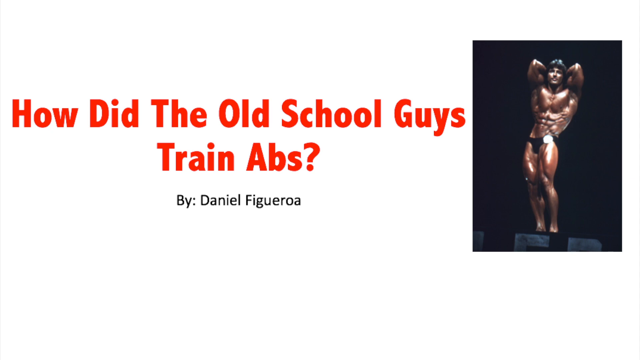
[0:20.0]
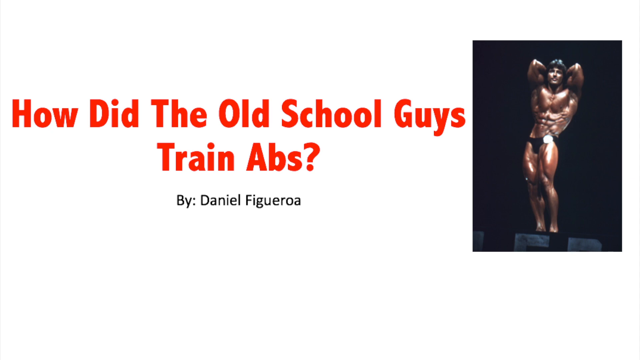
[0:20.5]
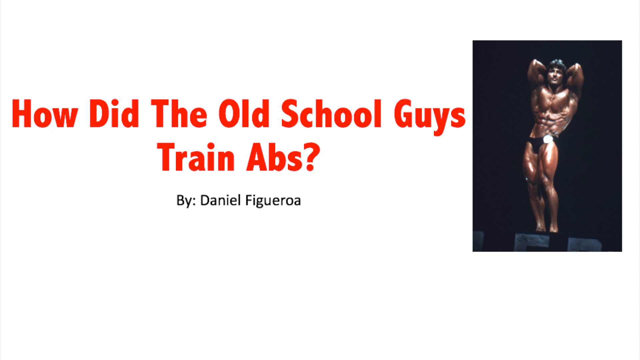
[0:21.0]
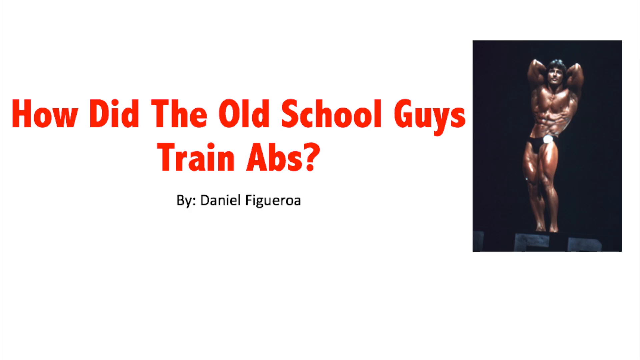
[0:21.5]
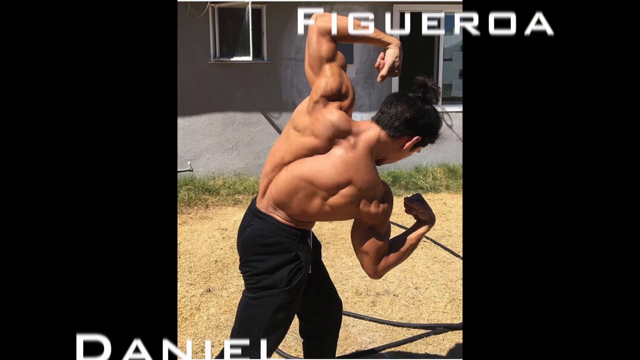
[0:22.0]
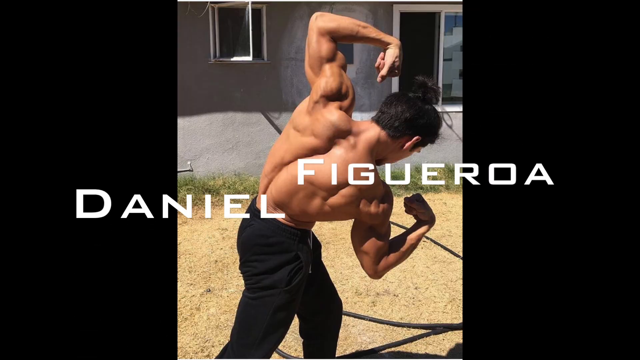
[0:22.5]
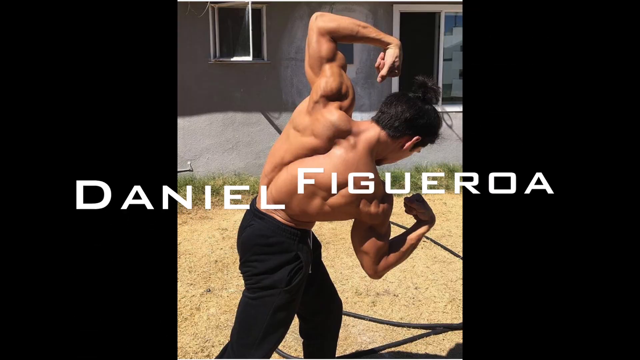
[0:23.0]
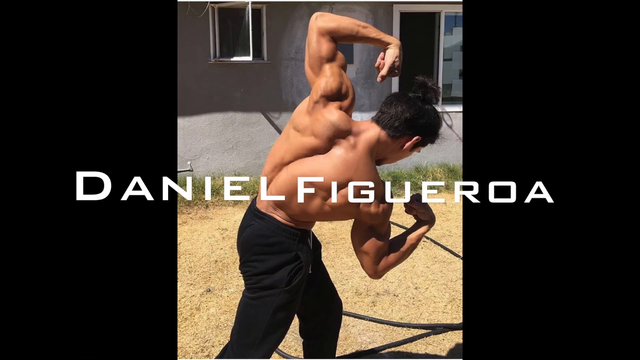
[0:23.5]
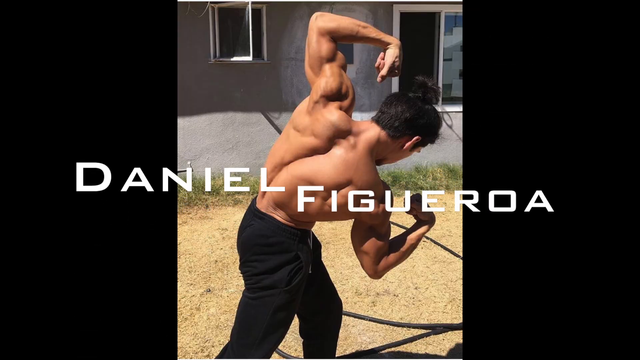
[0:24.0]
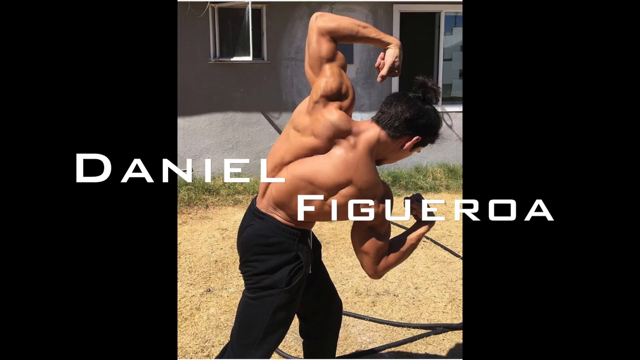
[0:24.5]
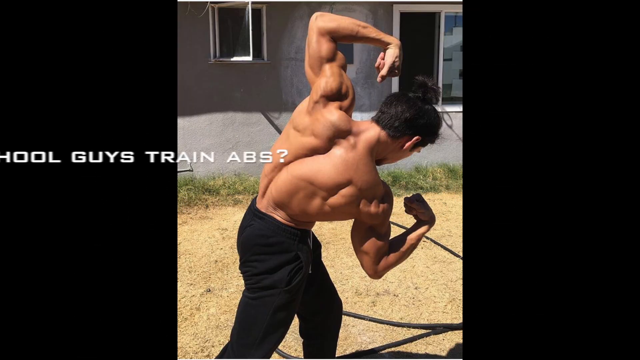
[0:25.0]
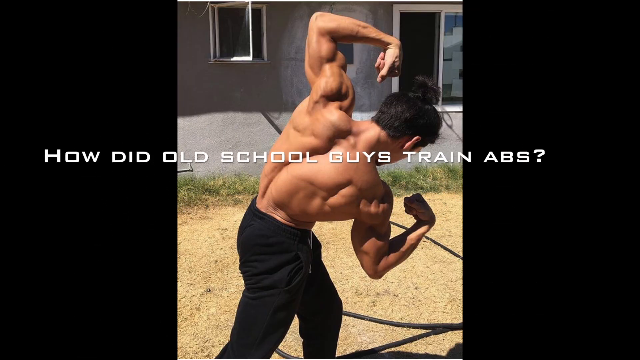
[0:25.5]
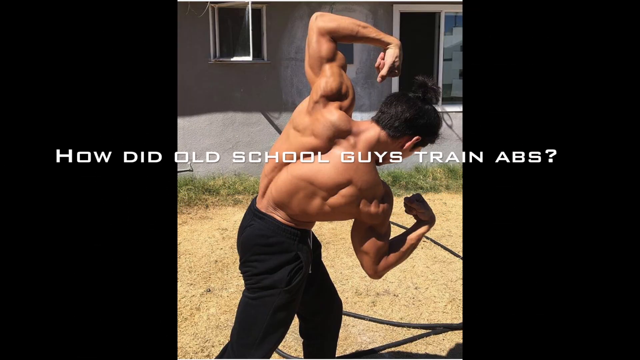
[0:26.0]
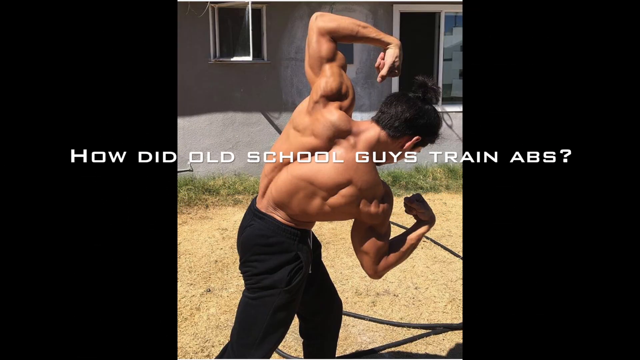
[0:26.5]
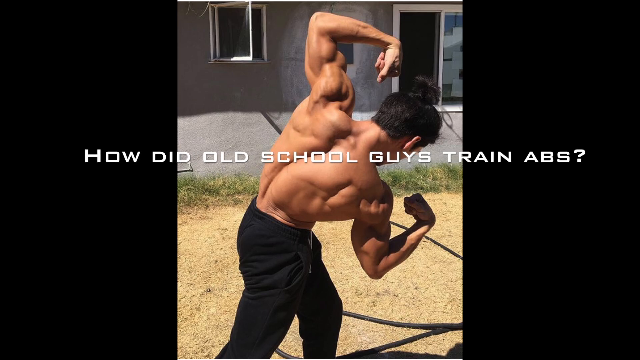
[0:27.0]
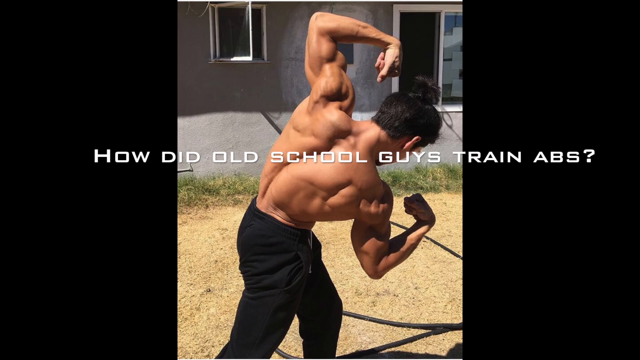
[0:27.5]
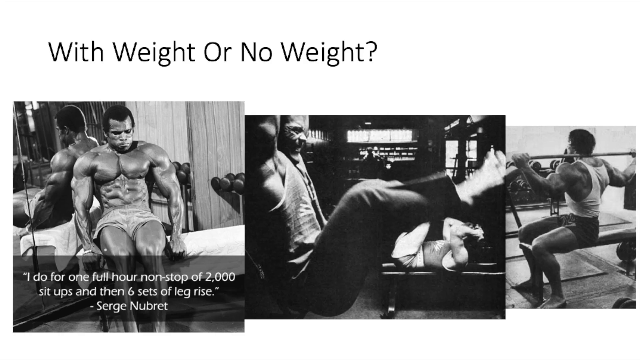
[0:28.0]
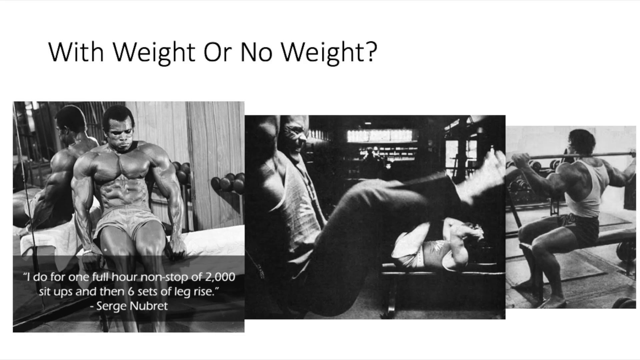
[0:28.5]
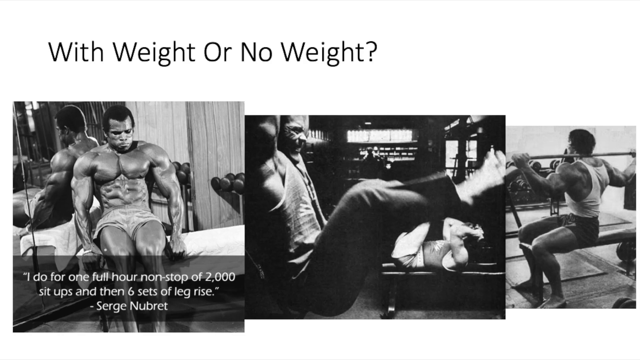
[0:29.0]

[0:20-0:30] The frame is a little wider than it is tall. On the right, a man who is apparently Frank Zane poses on a stage in little black shorts with his hands behind his head and his elbows up near his head, a pose that shows off his abs. On the left, big red text reads "how did the old school guys train abs?" with black text below it reading "by Daniel". The video then switches to a slide with a picture in the middle of a man doing a back pose: his torso faces three o'clock and he twists to his left, rotating his back toward the camera. His elbows are at a 90-degree angle, his wrists are curled toward him, and he flexes his back, biceps and shoulders. White text reads "Daniel Figueroa"; it comes into the center and fades away, and over it appears "how did old school guys train abs?". The video then goes to another slide with three black-and-white pictures.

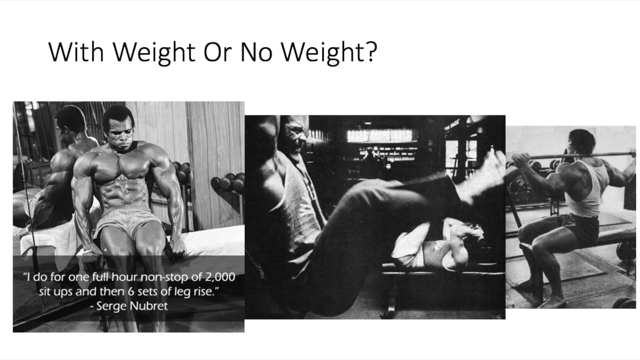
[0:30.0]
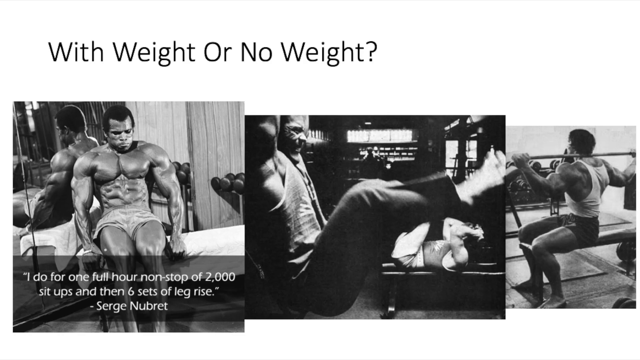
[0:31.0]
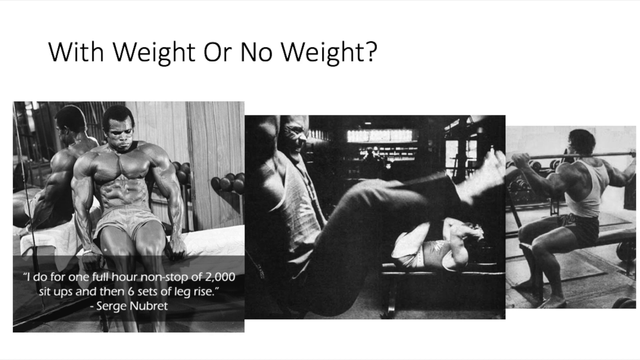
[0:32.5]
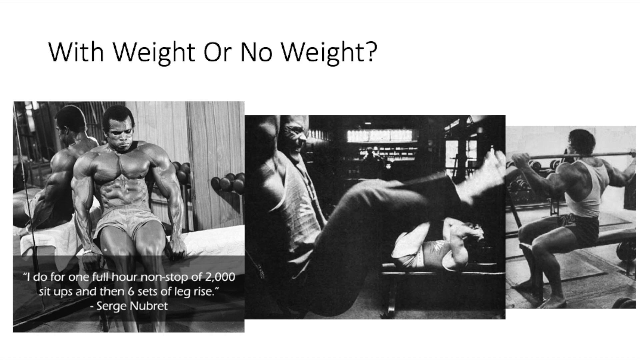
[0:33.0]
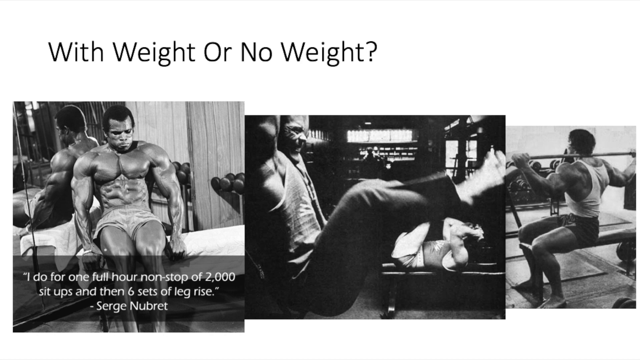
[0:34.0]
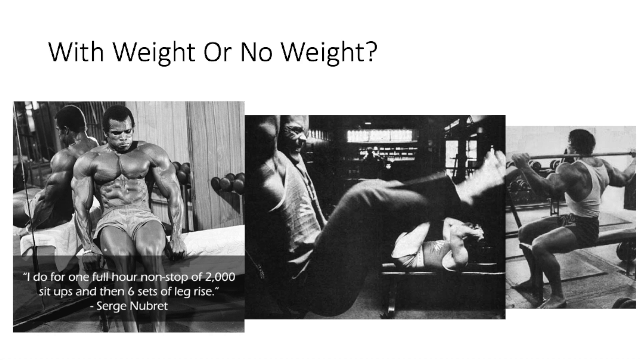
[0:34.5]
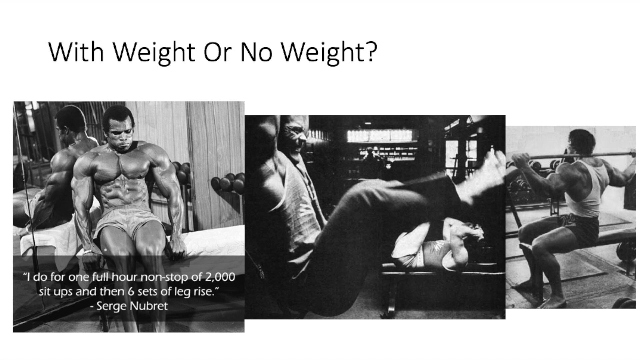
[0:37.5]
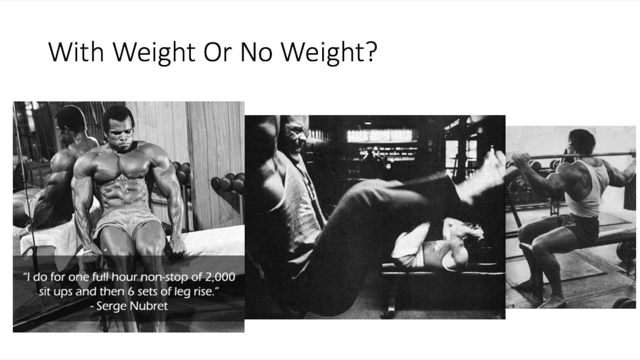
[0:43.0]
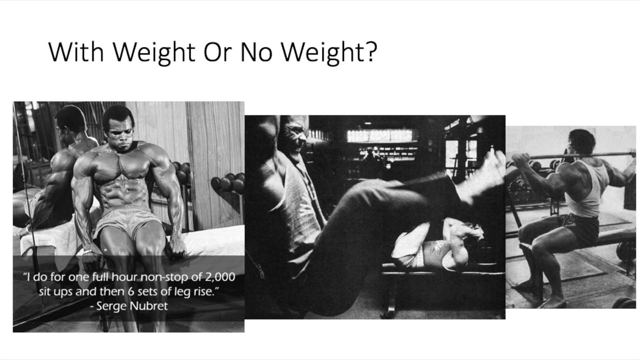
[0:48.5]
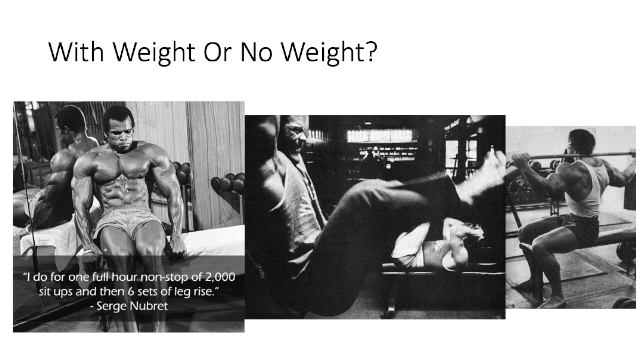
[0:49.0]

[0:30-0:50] The frame is a little wider than it is tall, and the bottom two thirds hold three black-and-white pictures. On the left is a black man who looks like an enhanced bodybuilder, sitting down, with what looks like a mirror behind him. The man in the middle is very blurry; he faces about nine o'clock and may be doing a leg press, and someone doing sit-ups is visible in the background behind him. The man on the right, also black, has his legs toward nine o'clock and his torso twisted slightly to the right, with a barbell behind his back resting on his shoulders. He is sitting on a bench, and dumbbells are racked along the wall behind him. In the lower left, white text reads "I do one full hour nonstop of two thousand sit ups and then six sets of leg rise", with the author, "Surge New Brett", given below.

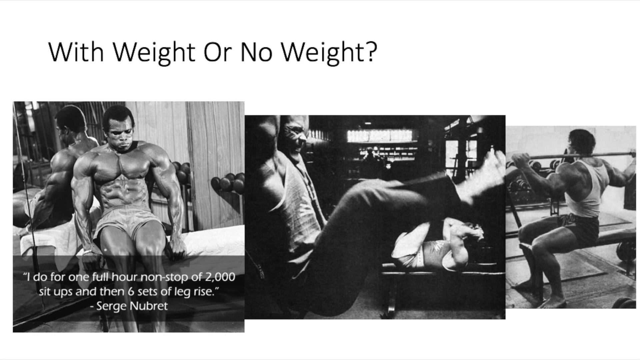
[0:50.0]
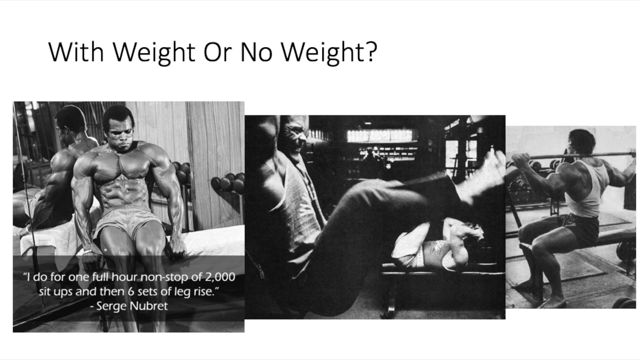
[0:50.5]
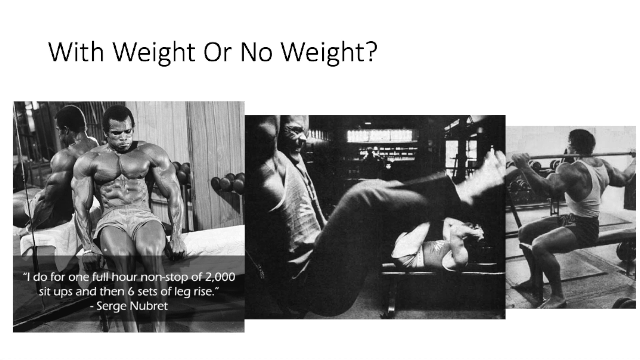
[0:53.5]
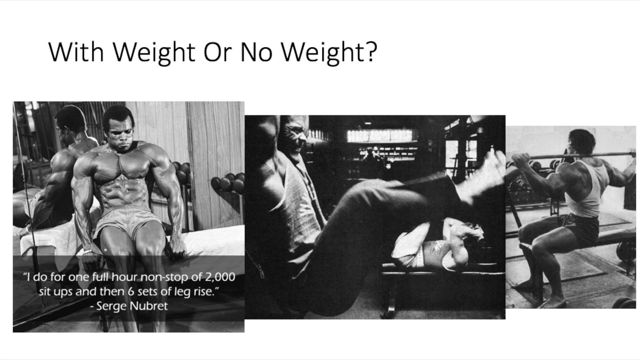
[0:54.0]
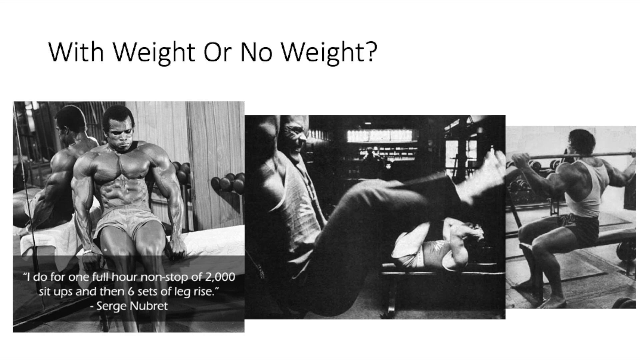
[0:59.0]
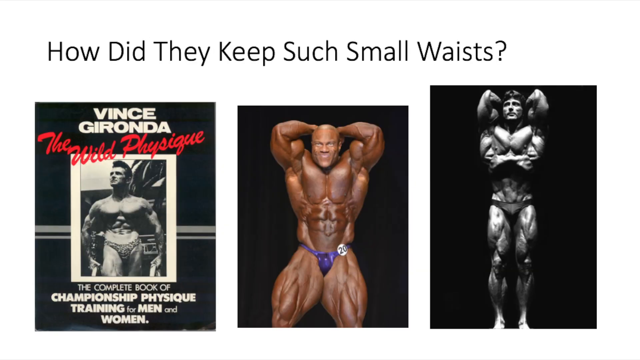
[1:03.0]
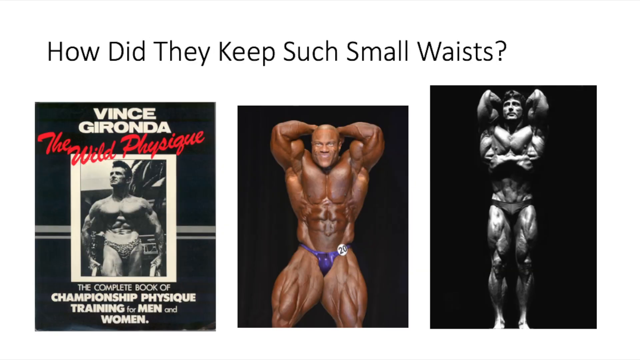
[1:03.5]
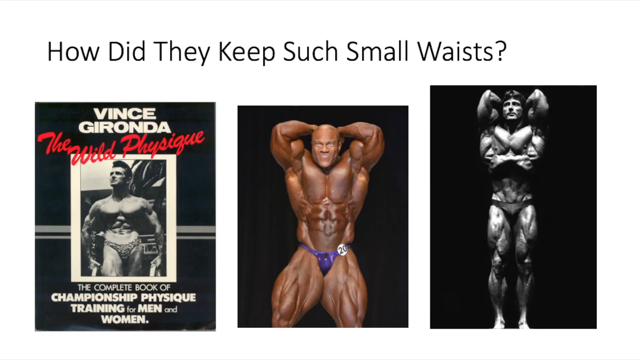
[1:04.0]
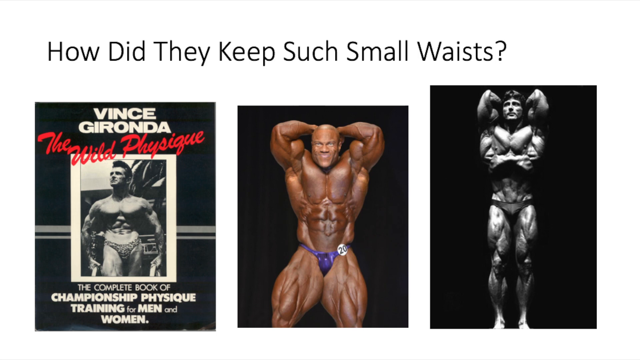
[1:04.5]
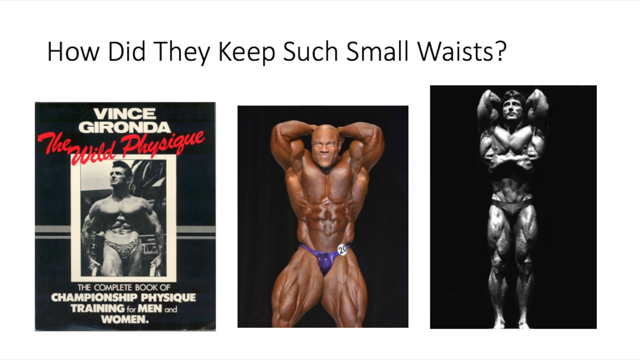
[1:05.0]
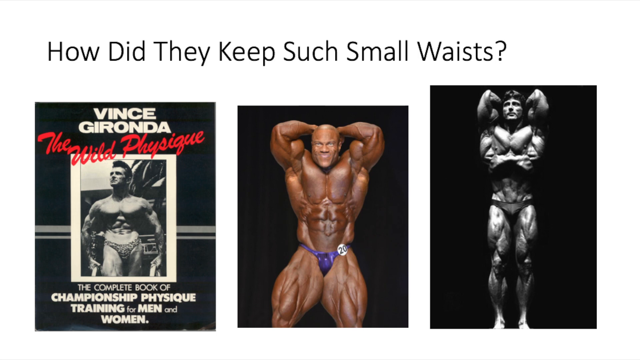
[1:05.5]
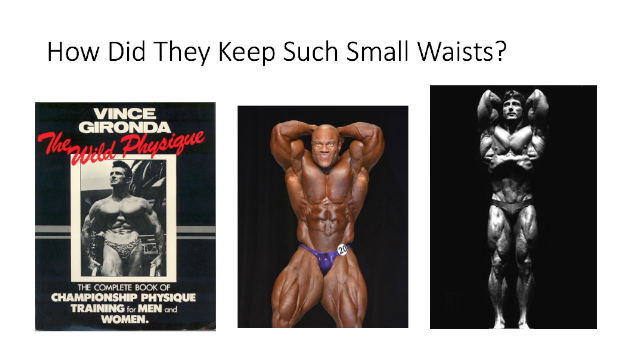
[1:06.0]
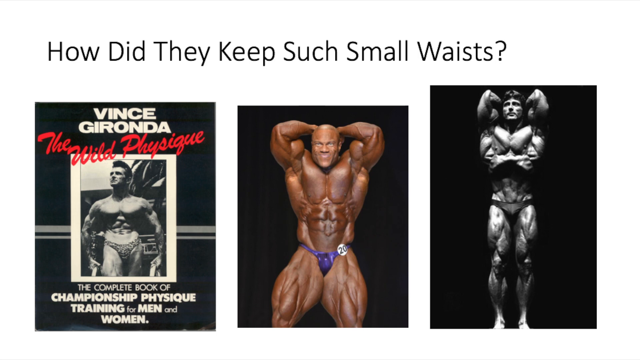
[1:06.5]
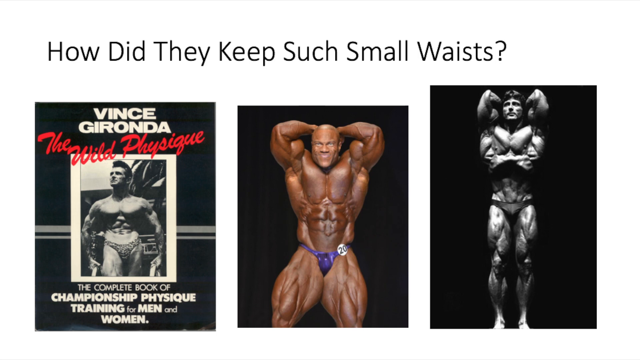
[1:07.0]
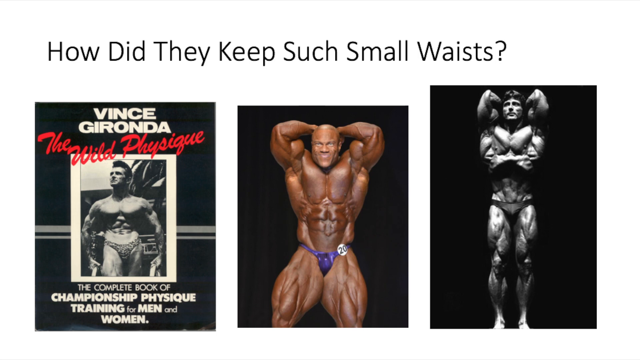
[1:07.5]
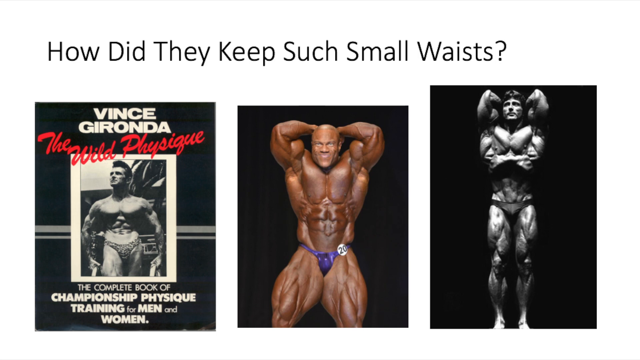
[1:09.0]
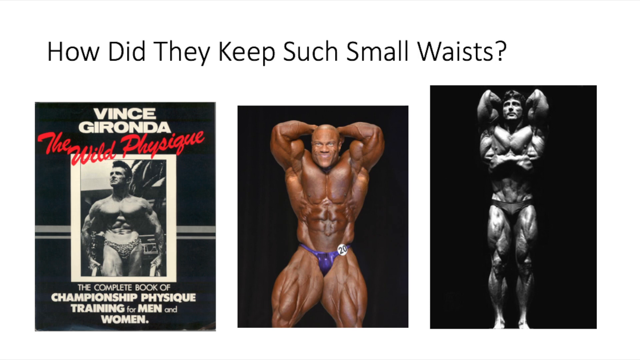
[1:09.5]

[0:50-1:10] The frame is a little wider than it is tall and shows three pictures. On the left, a black man who looks very enhanced sits facing the camera, with a mirror behind him doubling his reflection. In the center, a man facing right looks like he might be doing sit-ups, and behind him someone else is also doing sit-ups facing the opposite direction. On the right, a black man has his legs facing left but twists toward the right, with a barbell on his shoulders behind his neck. Text at the top reads "with weight or no weight". The video then advances to three more pictures of bodybuilders.